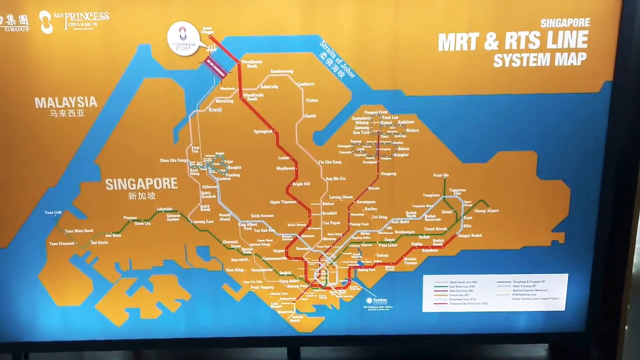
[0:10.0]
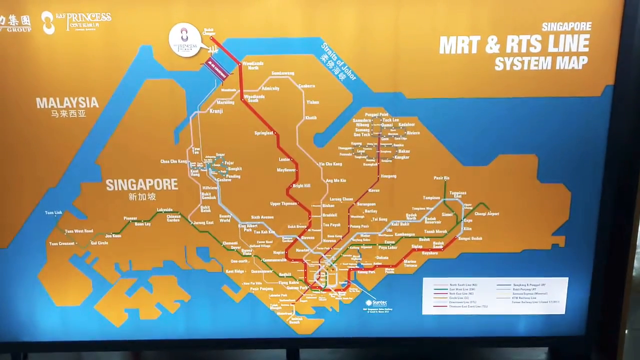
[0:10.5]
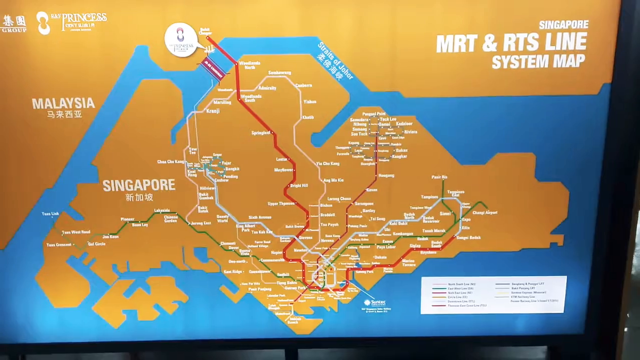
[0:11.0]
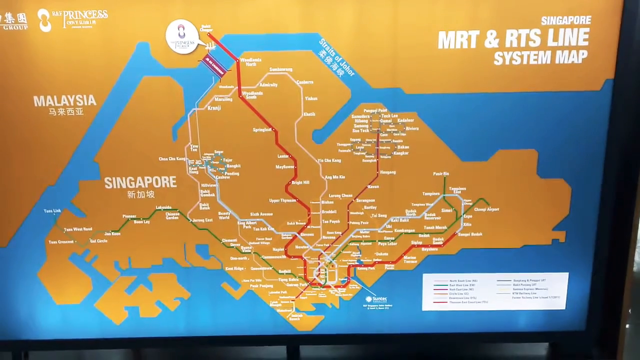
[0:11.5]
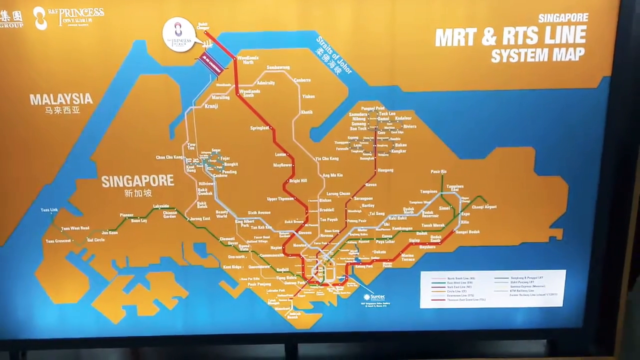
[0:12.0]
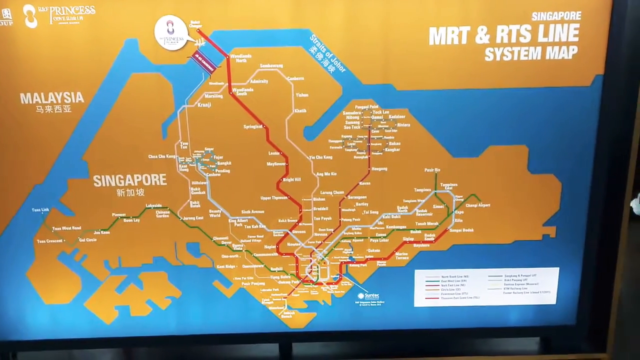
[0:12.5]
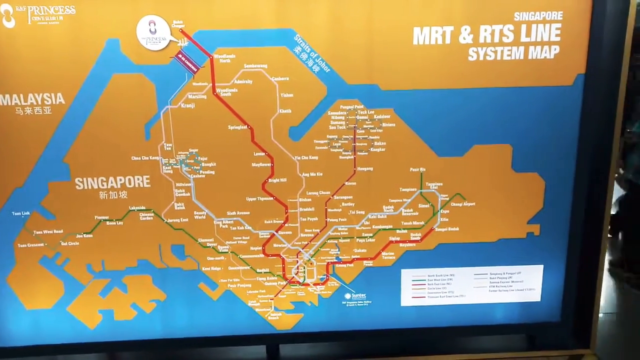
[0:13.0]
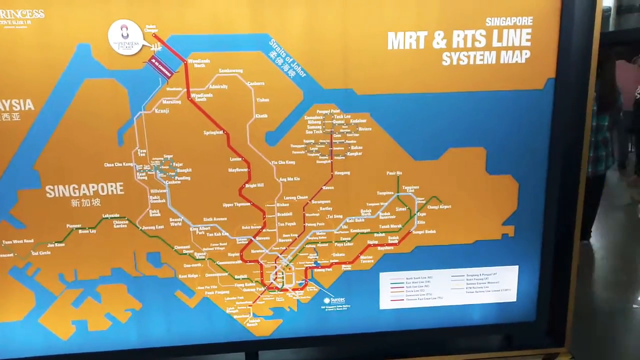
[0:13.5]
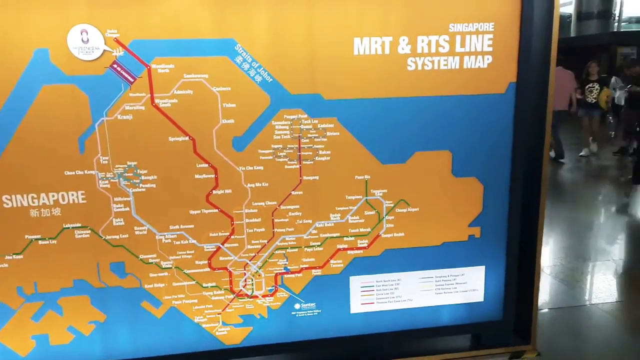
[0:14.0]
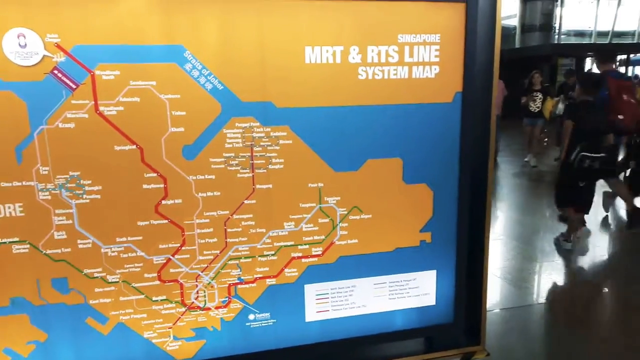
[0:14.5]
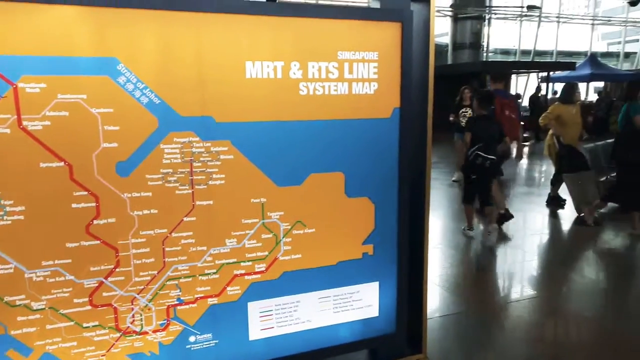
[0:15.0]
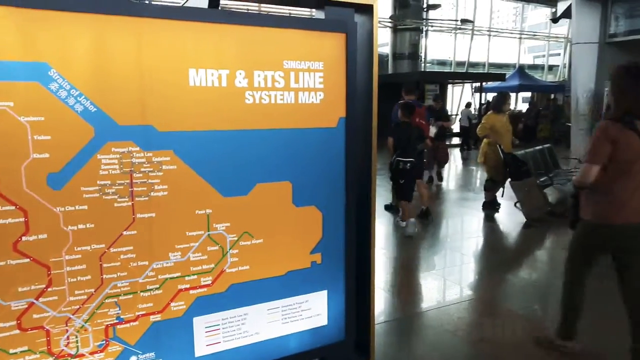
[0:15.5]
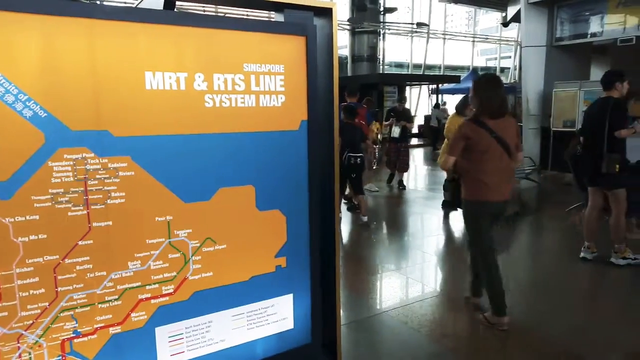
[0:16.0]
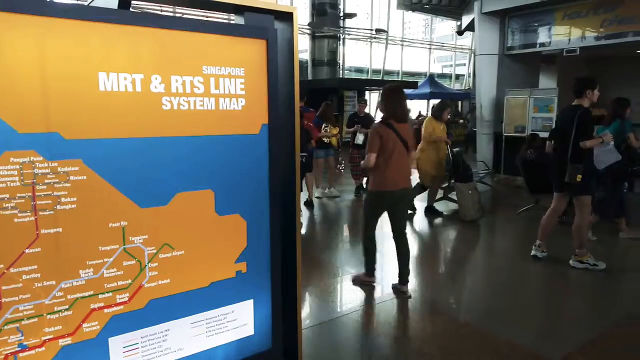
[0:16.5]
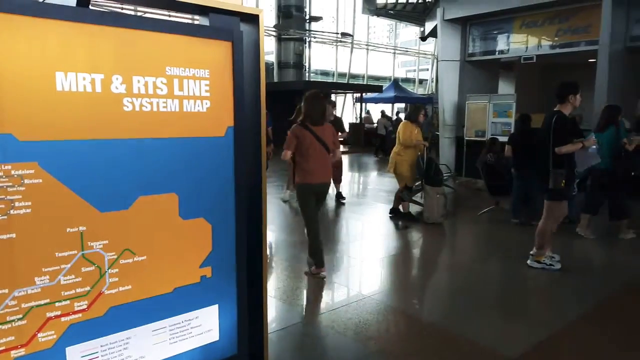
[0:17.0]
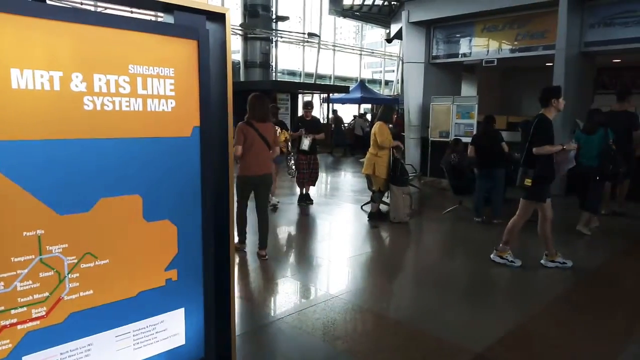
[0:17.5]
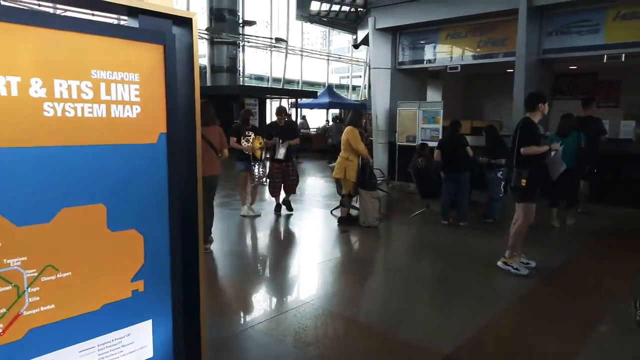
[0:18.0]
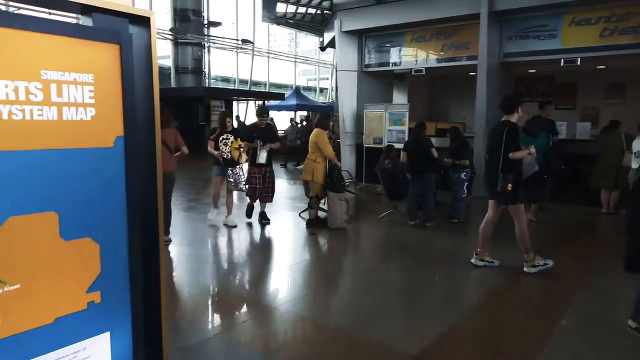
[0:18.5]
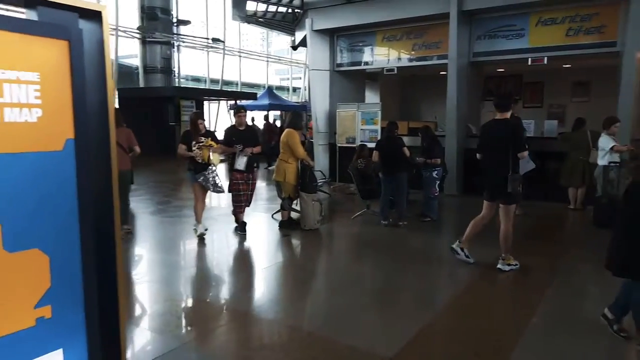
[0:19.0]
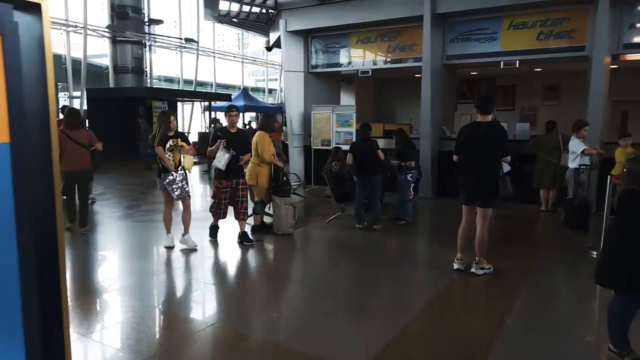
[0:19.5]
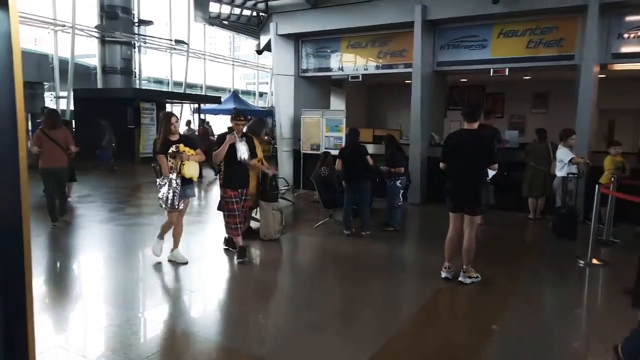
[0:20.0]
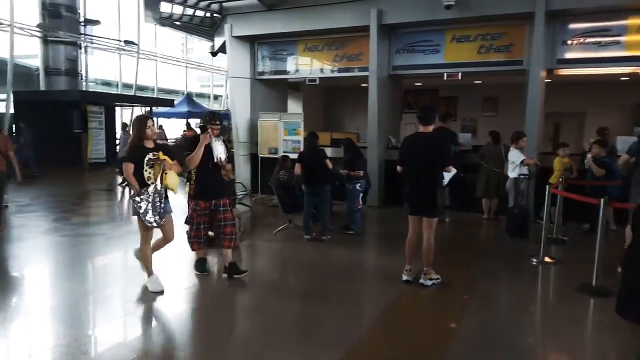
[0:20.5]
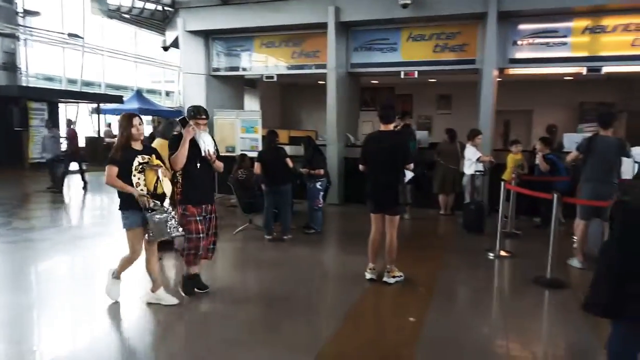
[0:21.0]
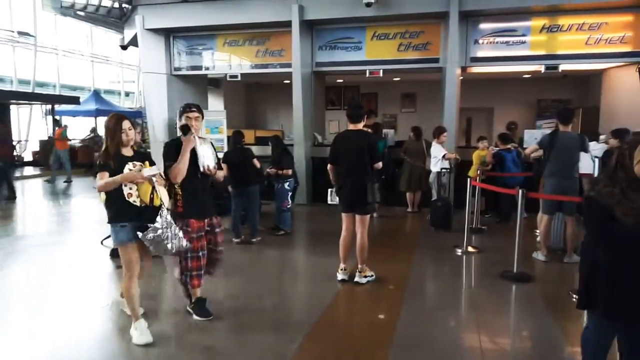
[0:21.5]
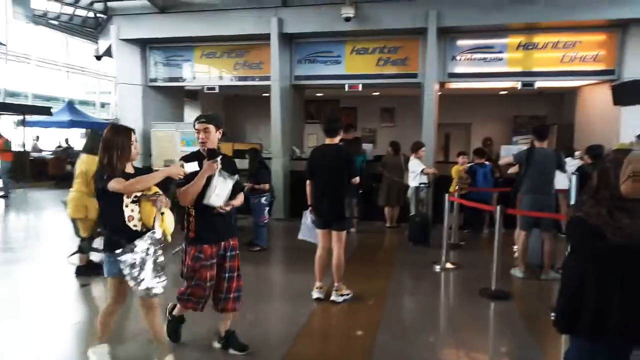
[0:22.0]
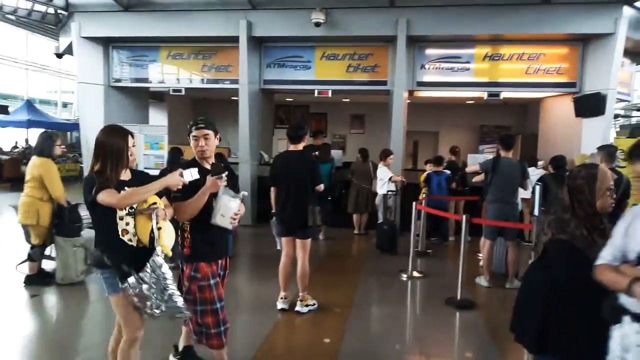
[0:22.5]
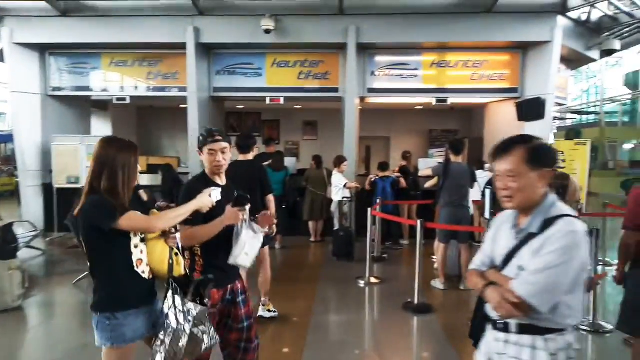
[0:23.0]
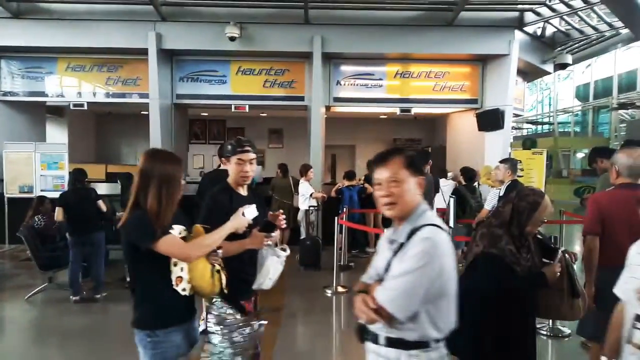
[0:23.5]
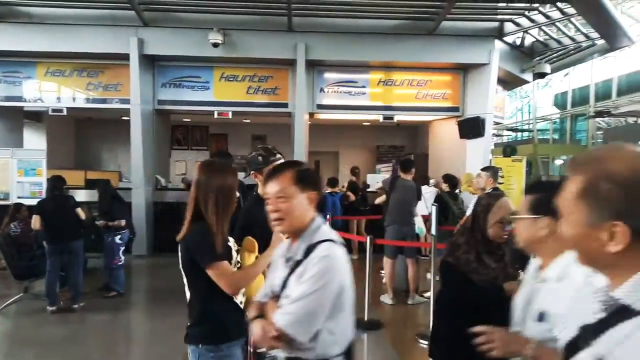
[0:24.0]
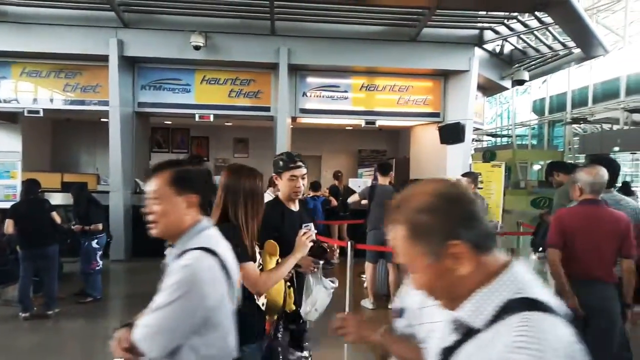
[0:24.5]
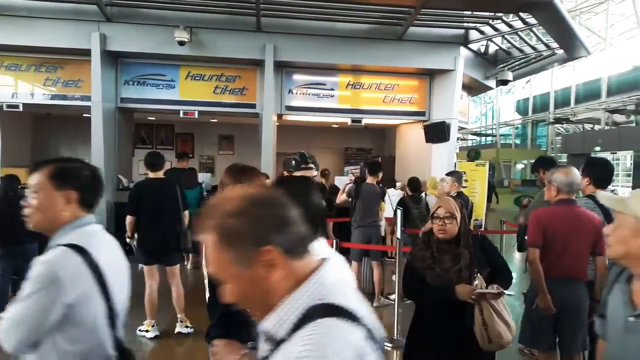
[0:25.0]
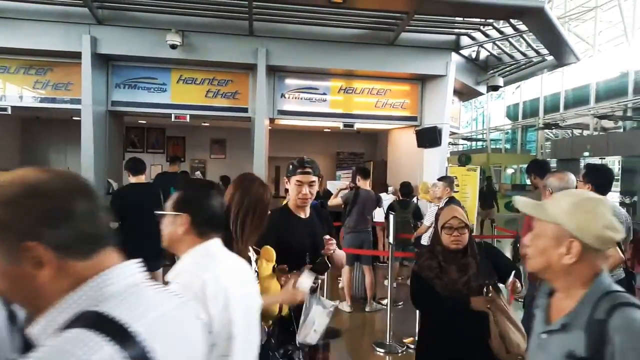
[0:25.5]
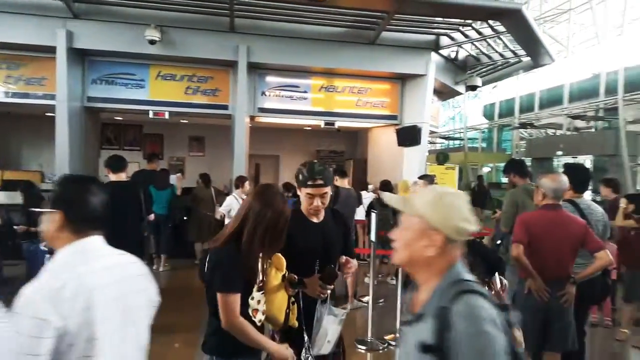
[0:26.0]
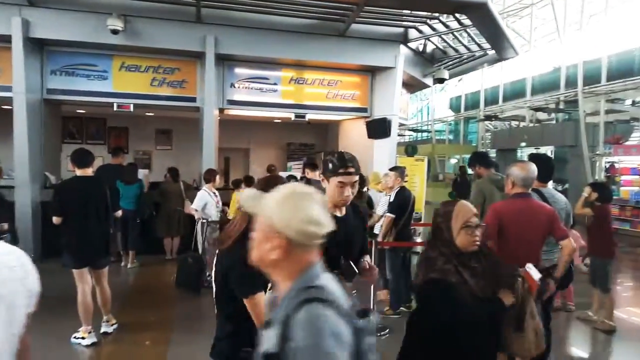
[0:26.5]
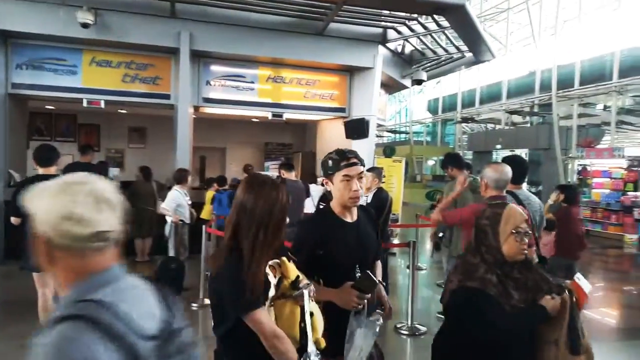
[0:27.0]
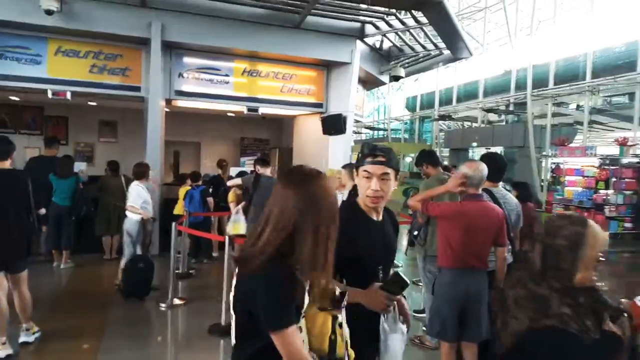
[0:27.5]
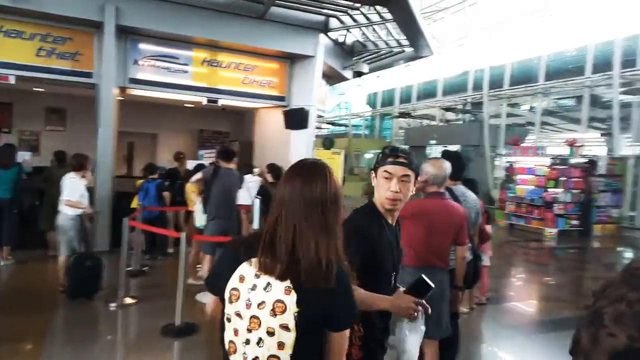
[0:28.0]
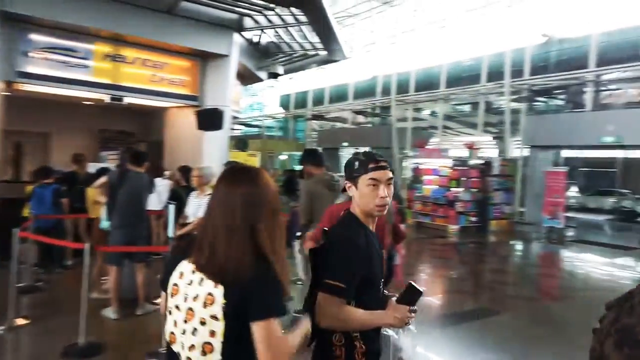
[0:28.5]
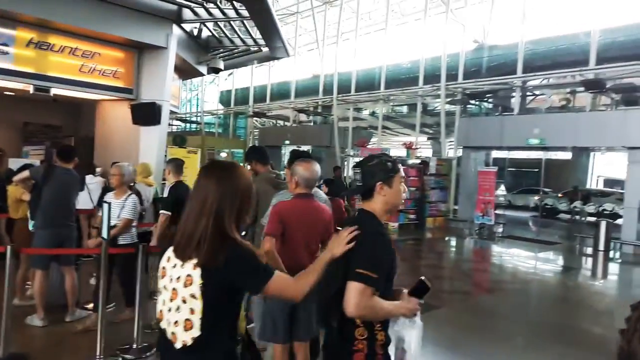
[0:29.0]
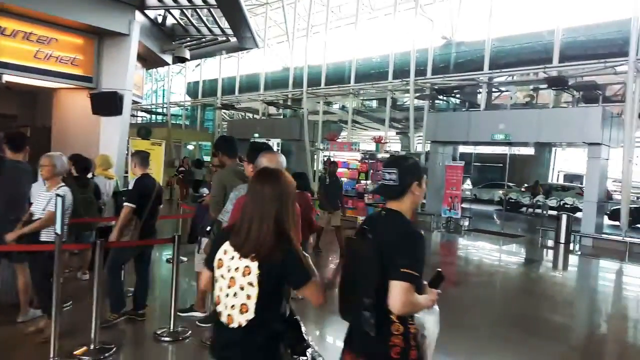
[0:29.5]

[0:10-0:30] The MRT and RTS line system map for Singapore shows Singapore along with the different routes and transit lines that cross all of Singapore and reach Malaysia across the Straits of Johor. The video then transitions to the inside of the transit hub station, where several lines for purchasing tickets or using the transit are marked off with ropes, and dozens of people are either standing in line or walking around. The station is a large building with a very high vaulted ceiling, though the ceiling itself is not visible. Many of the people are carrying bags or rolling luggage carts in front of them, and many have travel bags around their waists and shoulders. A few kiosks for buying goods, magazines, and food are visible in the background.